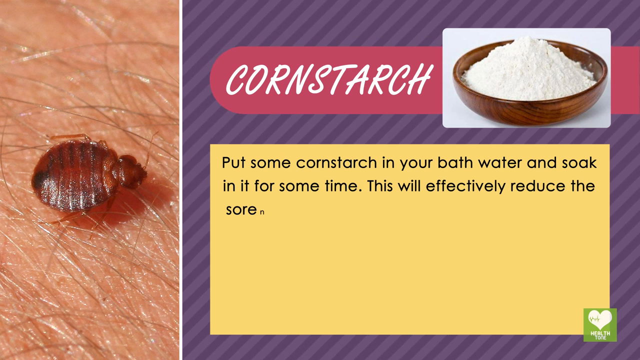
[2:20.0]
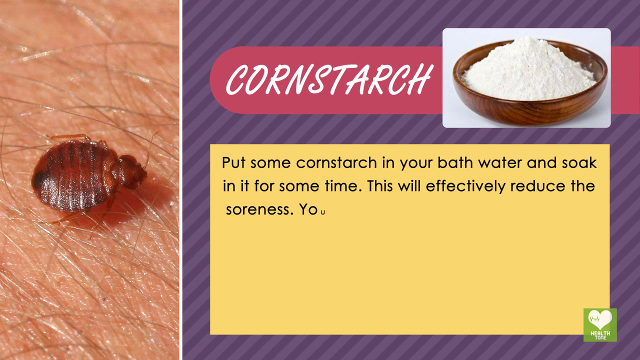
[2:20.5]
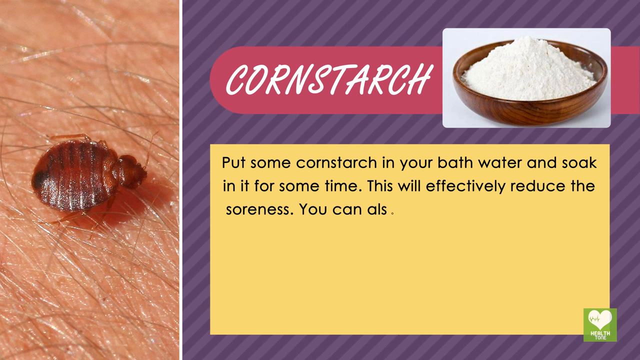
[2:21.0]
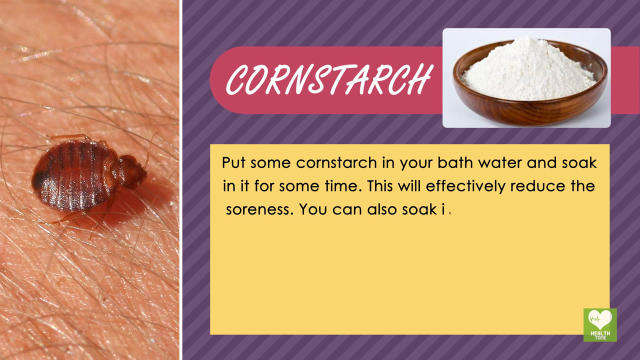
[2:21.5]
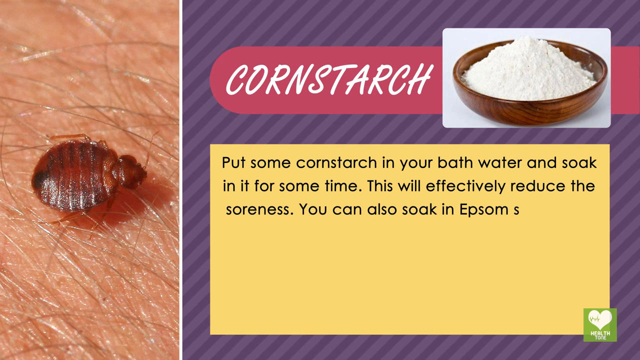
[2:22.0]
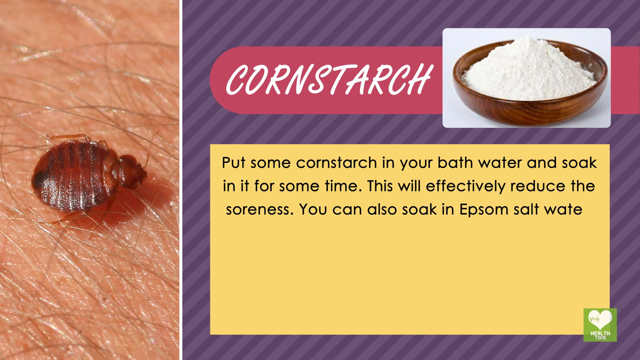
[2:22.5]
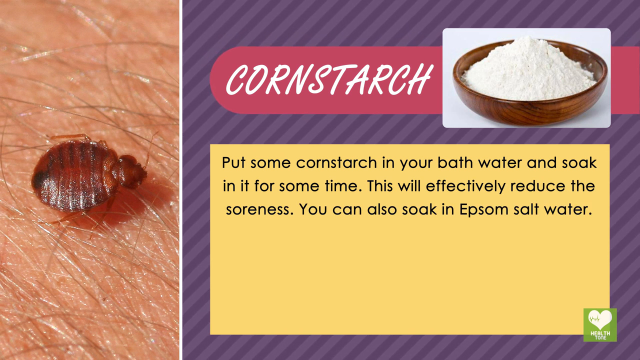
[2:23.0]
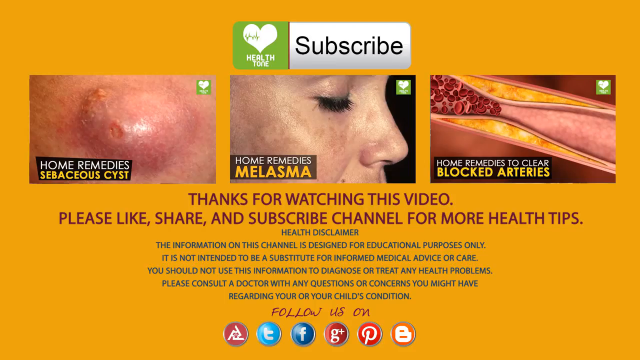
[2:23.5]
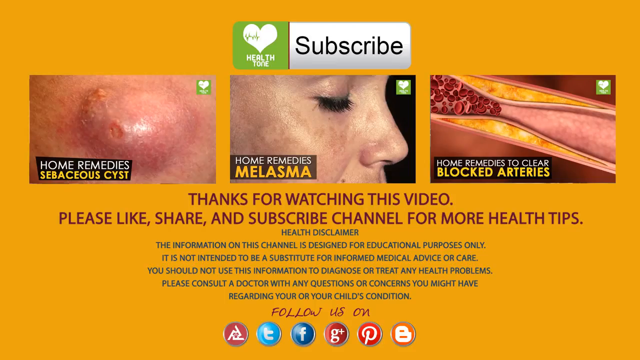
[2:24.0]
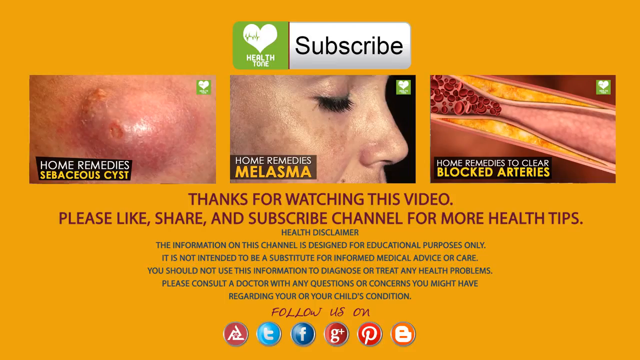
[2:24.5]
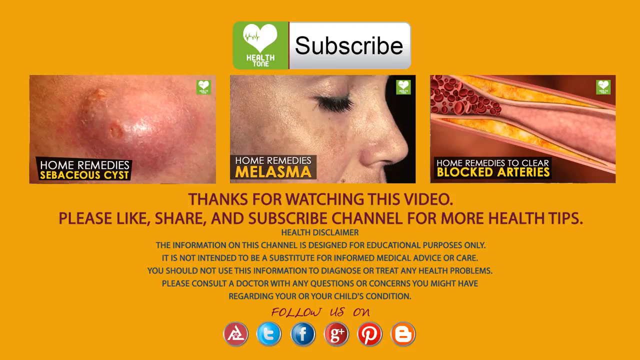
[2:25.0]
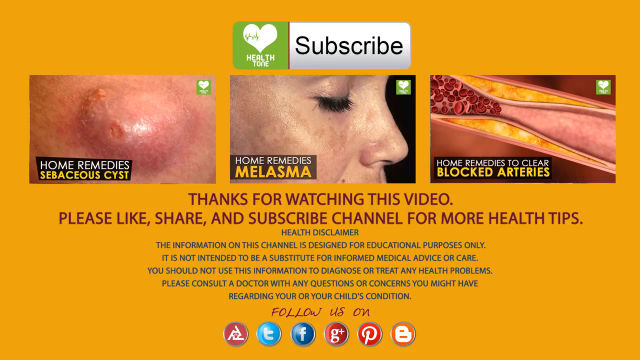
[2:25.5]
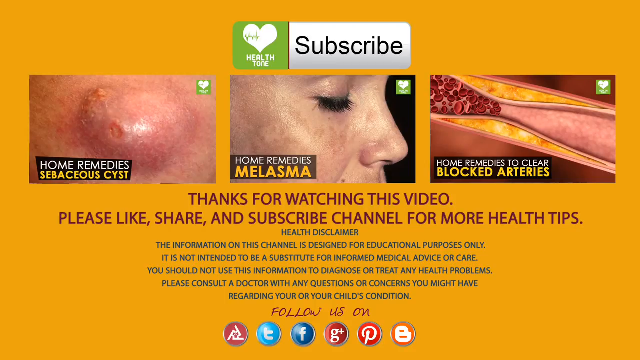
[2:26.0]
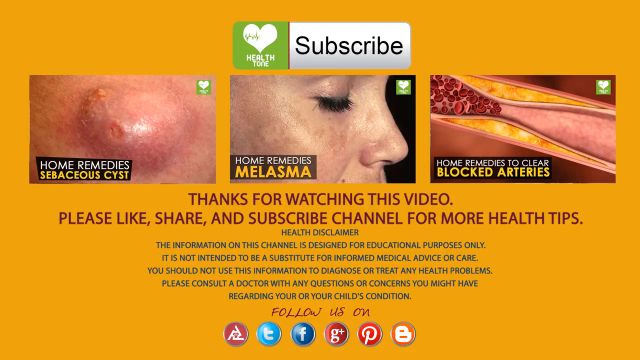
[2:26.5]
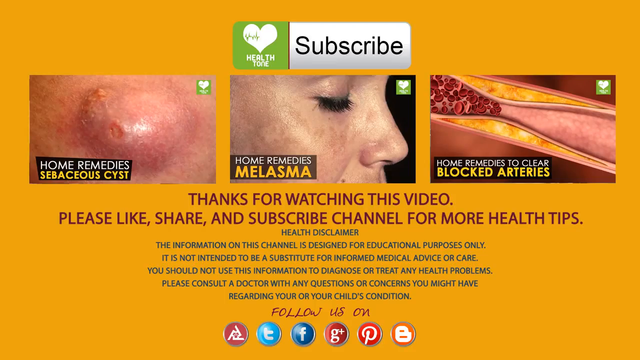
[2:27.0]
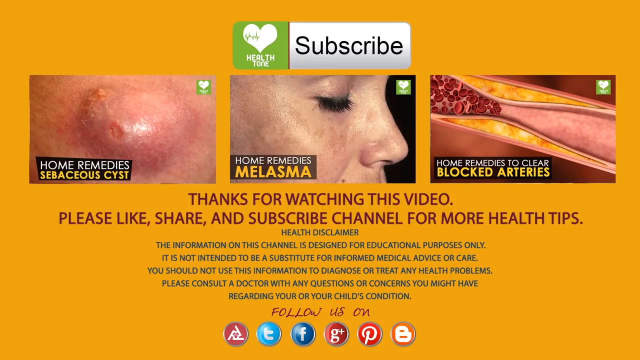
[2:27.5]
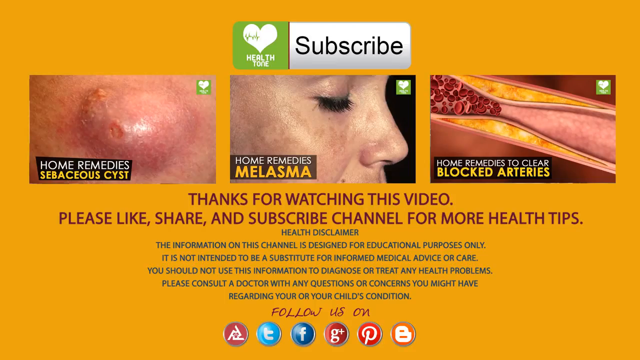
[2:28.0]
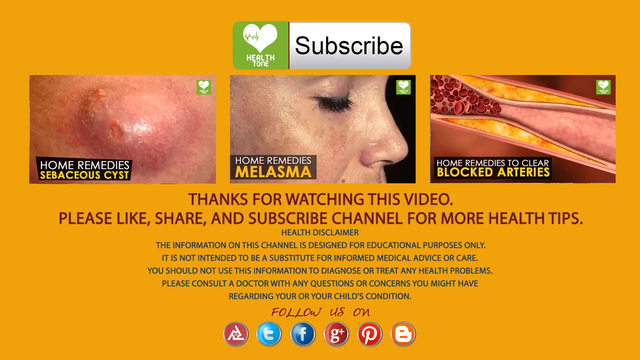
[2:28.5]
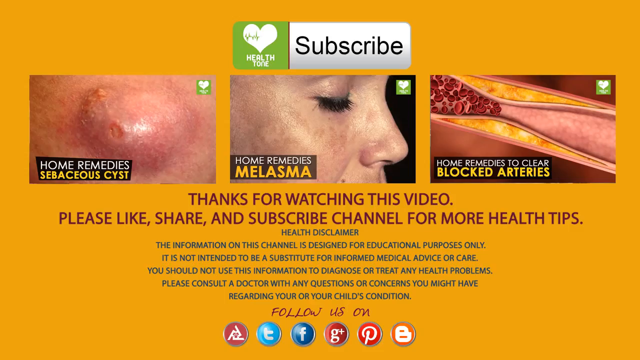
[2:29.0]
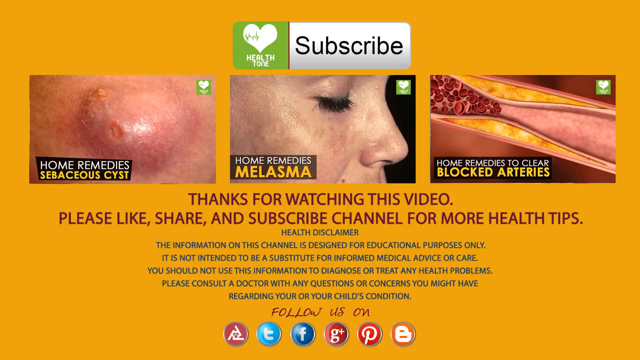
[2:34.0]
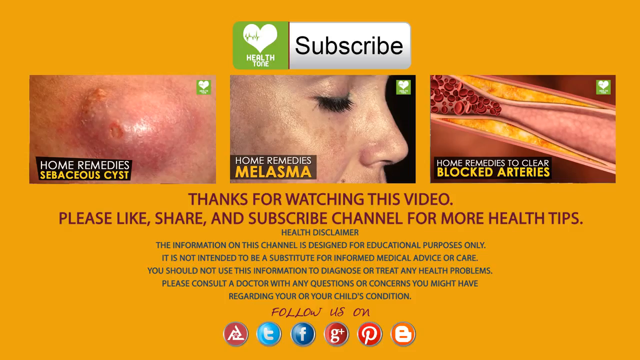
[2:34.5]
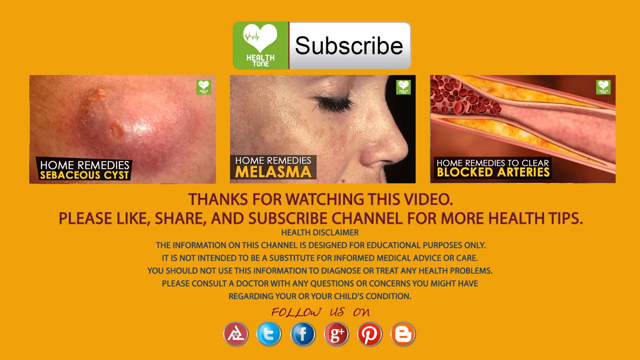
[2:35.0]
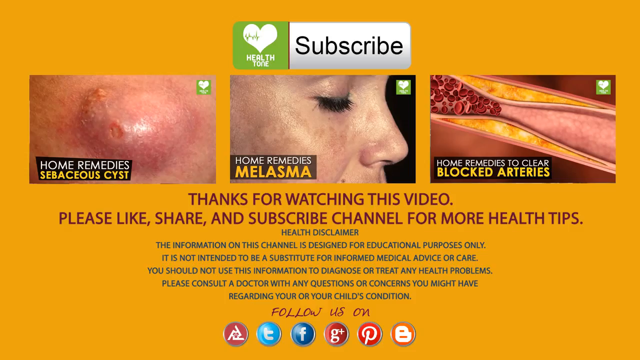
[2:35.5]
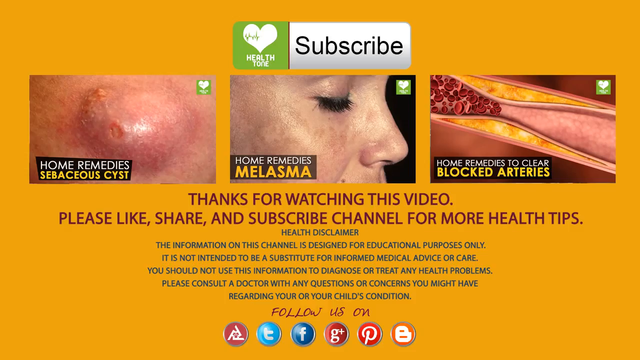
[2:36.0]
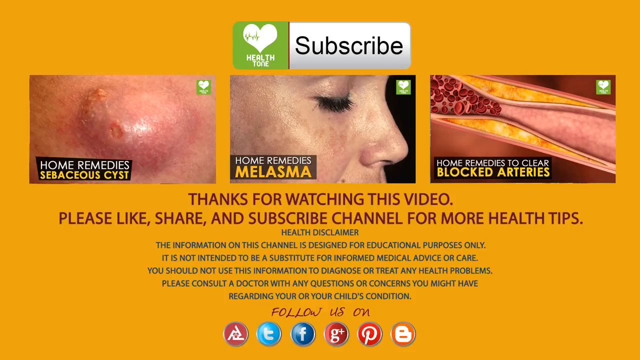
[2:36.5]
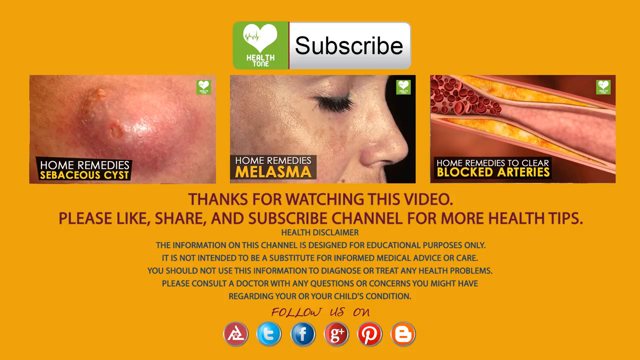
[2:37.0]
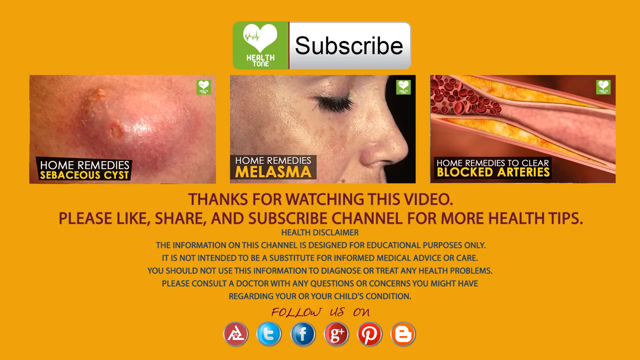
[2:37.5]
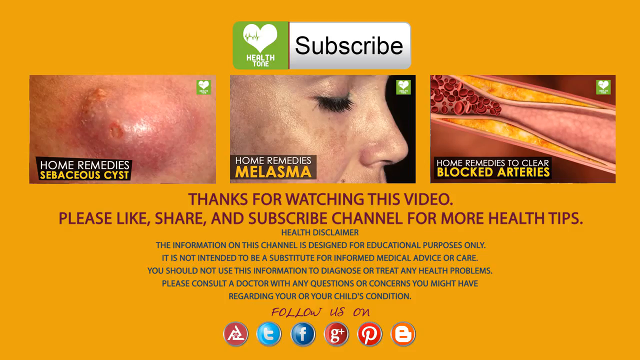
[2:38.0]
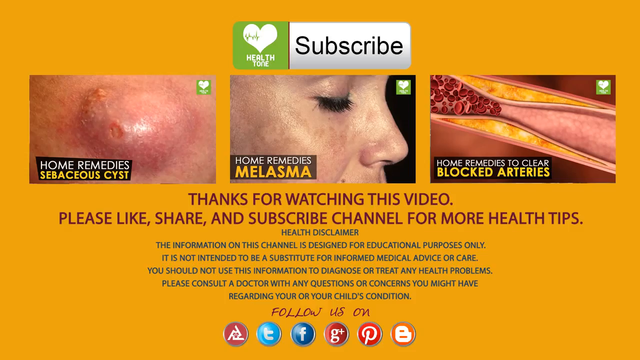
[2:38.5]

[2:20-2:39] The text continues: "You can also soak in Epsom salt water." Next is a bright, almost mustard-yellow thank-you slide. At the very top in the middle is a Subscribe button; its first quarter is lime green with a heart inside, and below the heart are the words "Health Tone." Underneath the Subscribe button are three photos laid out horizontally. The first, on the left, is a picture of a sebaceous cyst, with the Health Tone logo in the upper right-hand corner and, in the bottom left-hand corner, a black box with "Home Remedies" in white uppercase sans-serif font and below it "Sebaceous Cyst" in a heavier weight of the same font, in the same mustard yellow as the slide background. The next photo, directly under the Subscribe button and to the right of the sebaceous cyst, shows a light-skinned person with their eyes closed and very thick eyelashes, with a little melasma on the cheeks and under the eyes. In its bottom left-hand corner is a transparent black box reading "Home Remedies Melasma," with "Home Remedies" in the same uppercase sans-serif font and "Melasma" directly below in a larger, heavier font in the same mustard yellow. The final photo, to the right, says "Home Remedies to Clear Blocked Arteries": "Home Remedies to Clear" is in smaller white uppercase sans-serif, and "Blocked Arteries" is below it in a larger, heavier font in a yellow slightly brighter than the background. The image shows an artery that narrows, with red blood cells being blocked at the narrowest point so they can't get through. Below the three pictures is the text "Thanks for watching this video." and on the next line "Please like, share, and subscribe channel for more health tips." Below that, in a smaller all-uppercase font, it says "Health Disclaimer. The information on this channel is designed for educational purposes only. It is not intended to be a substitute for informed medical advice or care. You should not use this information to diagnose or treat any health problems. Please consult a doctor with any questions or concerns you might have regarding your or your child's condition." At the very bottom center of the slide is the text "Follow Us On" in what appears to be a red handwritten font, with social media icons.